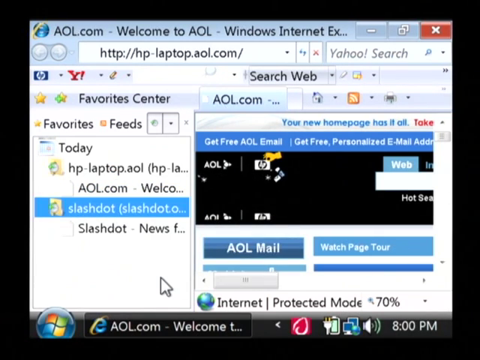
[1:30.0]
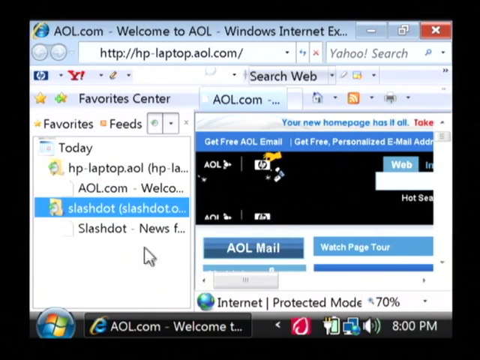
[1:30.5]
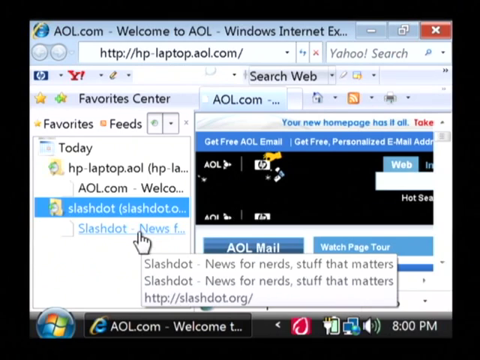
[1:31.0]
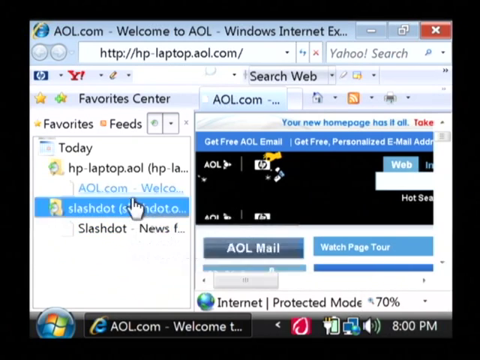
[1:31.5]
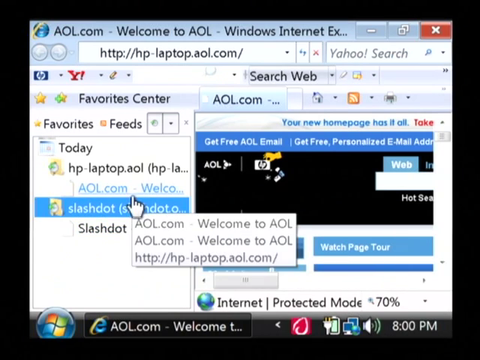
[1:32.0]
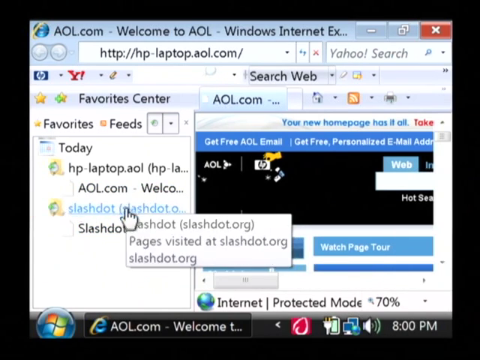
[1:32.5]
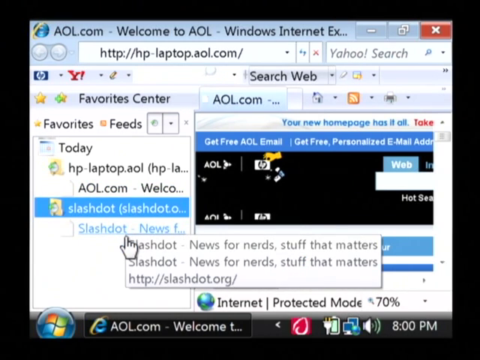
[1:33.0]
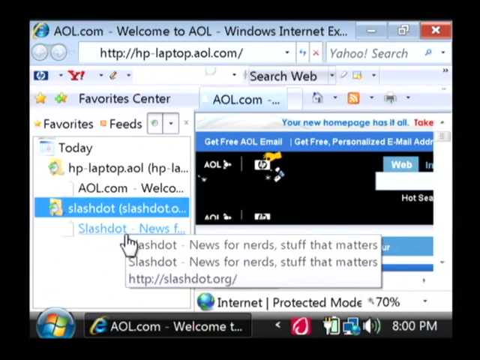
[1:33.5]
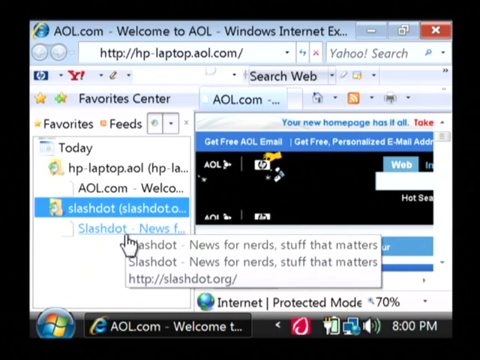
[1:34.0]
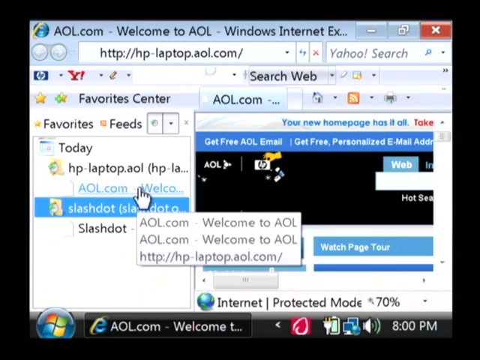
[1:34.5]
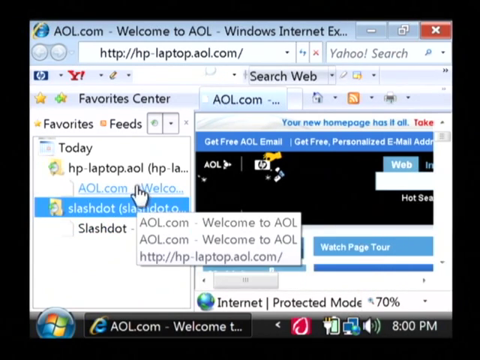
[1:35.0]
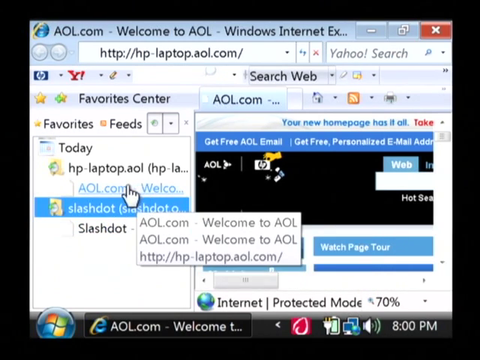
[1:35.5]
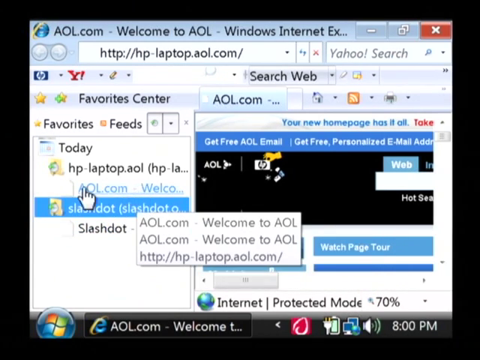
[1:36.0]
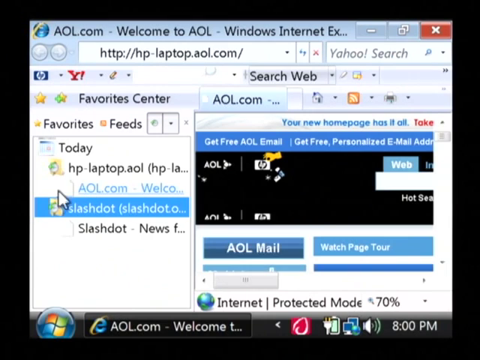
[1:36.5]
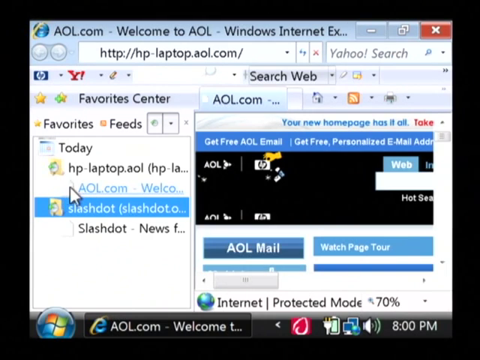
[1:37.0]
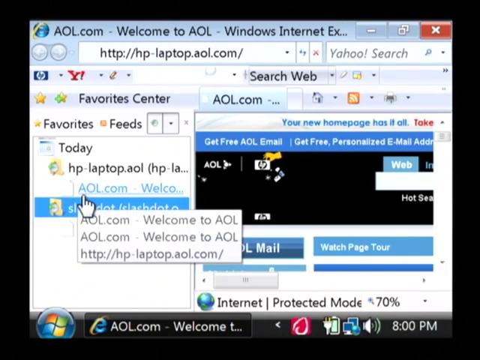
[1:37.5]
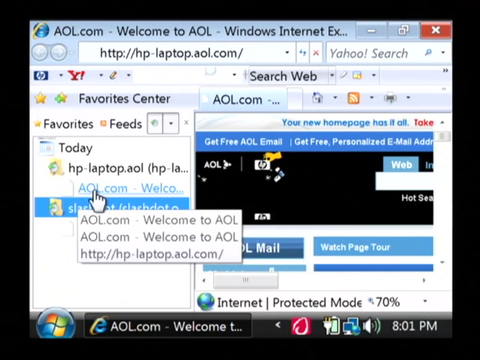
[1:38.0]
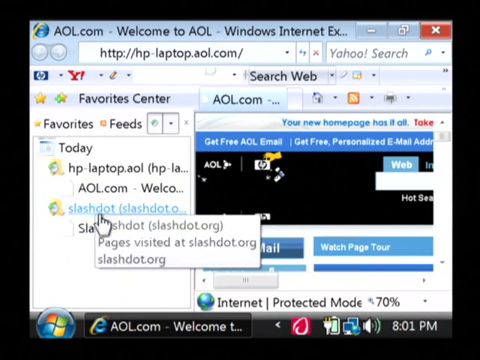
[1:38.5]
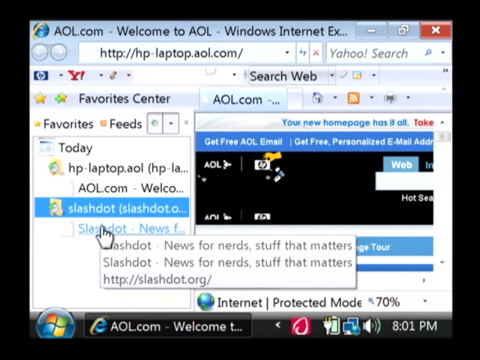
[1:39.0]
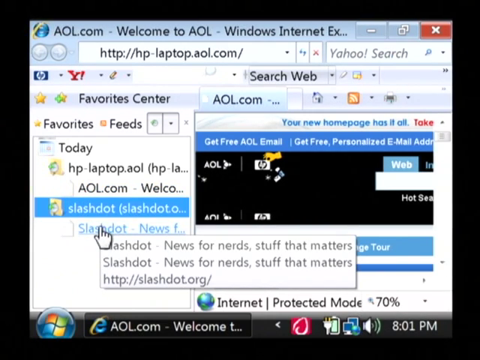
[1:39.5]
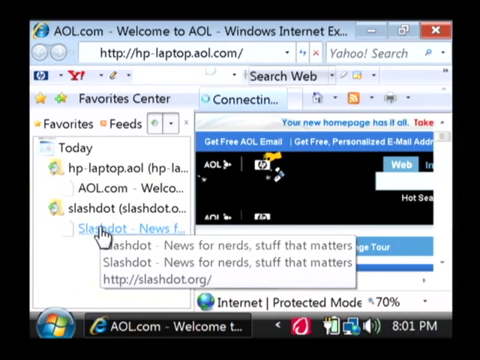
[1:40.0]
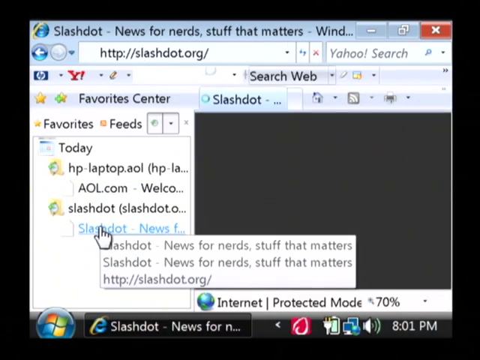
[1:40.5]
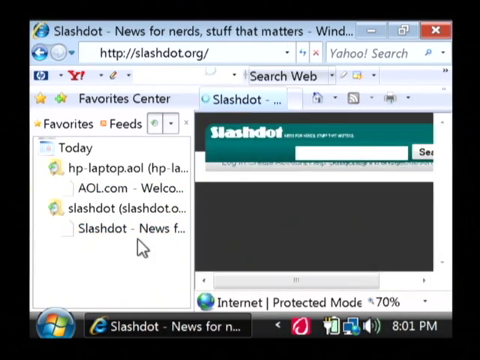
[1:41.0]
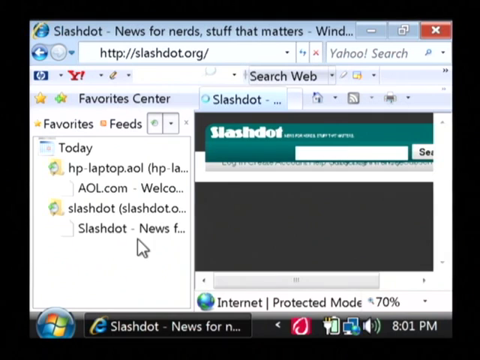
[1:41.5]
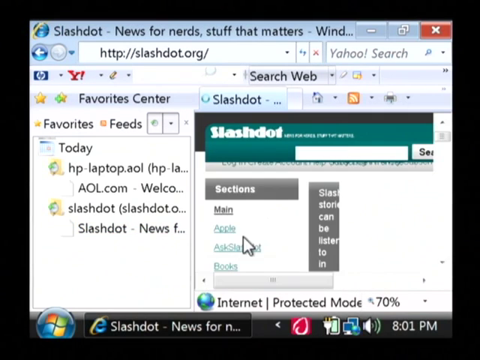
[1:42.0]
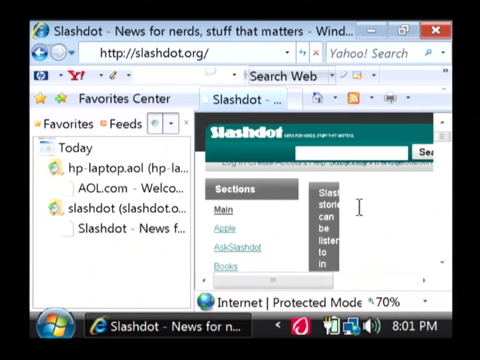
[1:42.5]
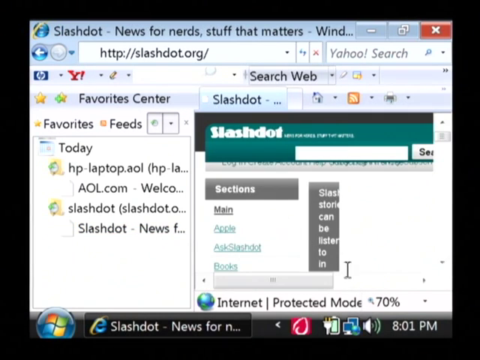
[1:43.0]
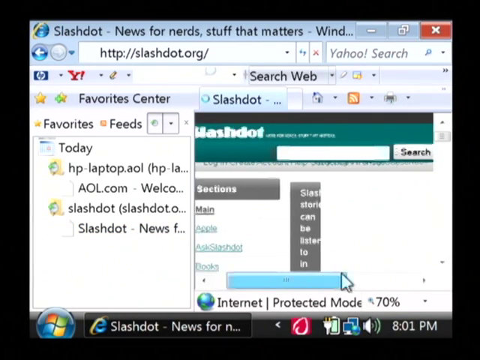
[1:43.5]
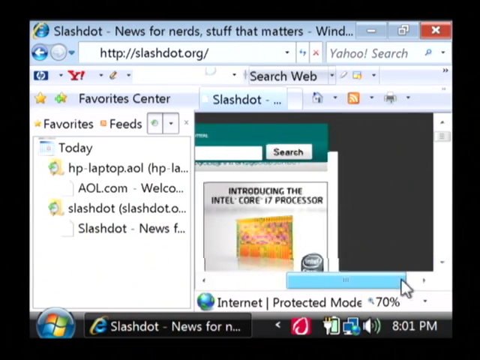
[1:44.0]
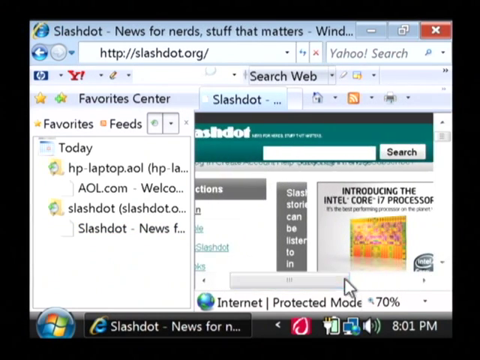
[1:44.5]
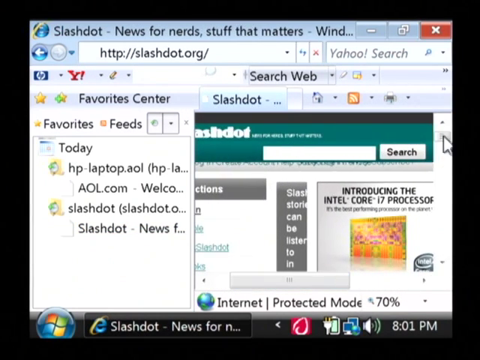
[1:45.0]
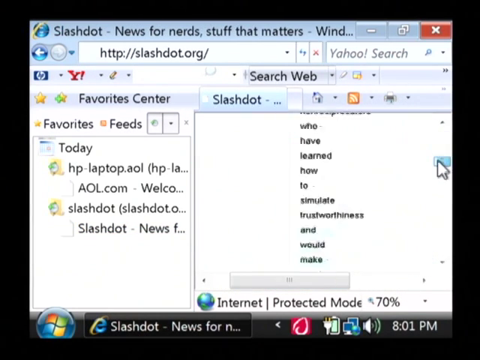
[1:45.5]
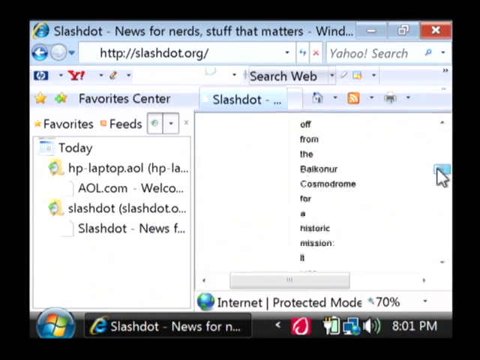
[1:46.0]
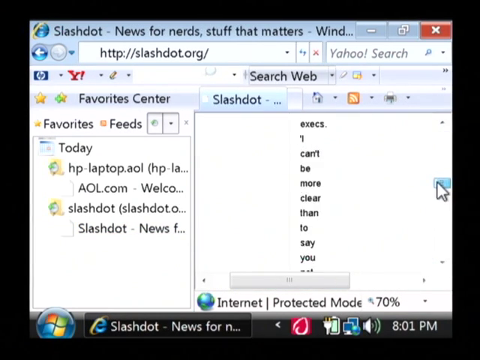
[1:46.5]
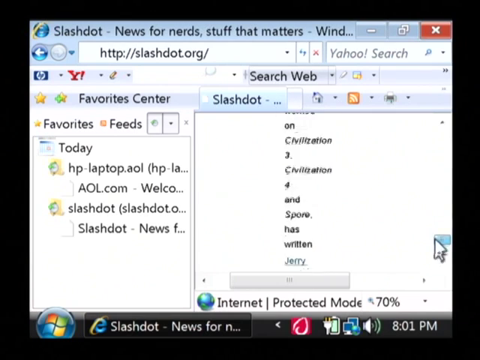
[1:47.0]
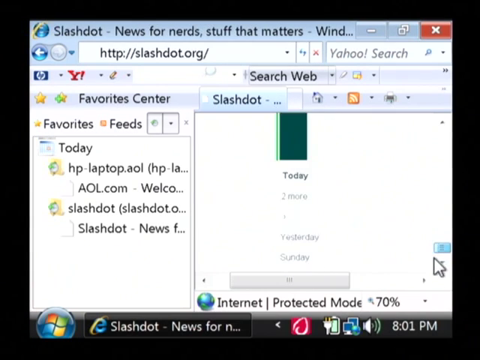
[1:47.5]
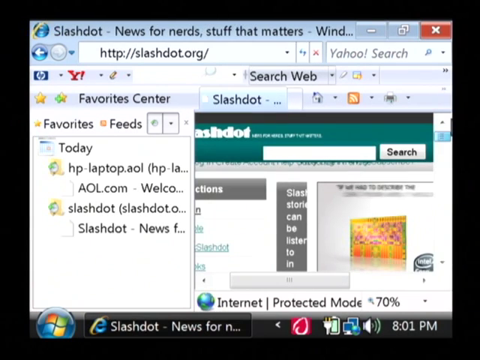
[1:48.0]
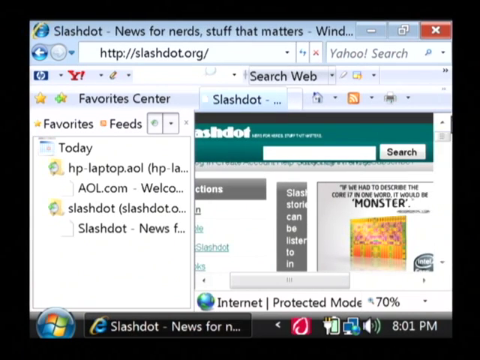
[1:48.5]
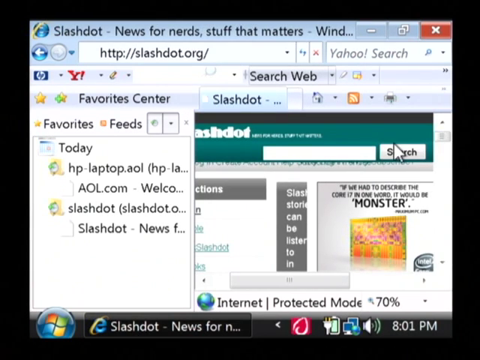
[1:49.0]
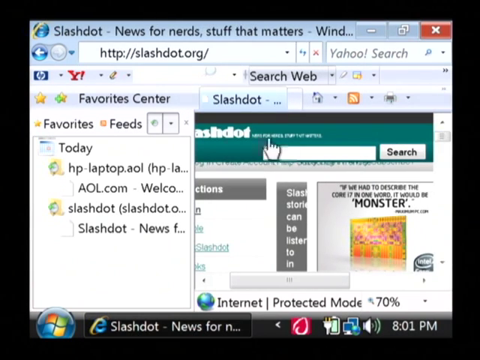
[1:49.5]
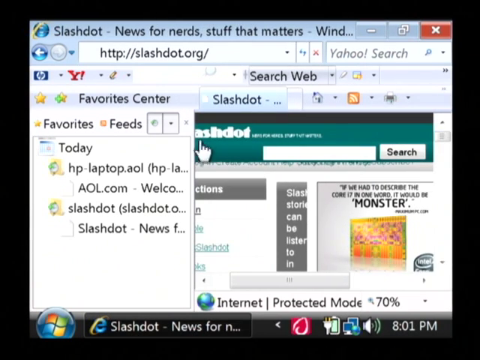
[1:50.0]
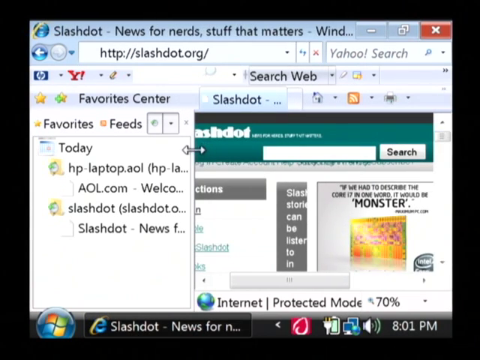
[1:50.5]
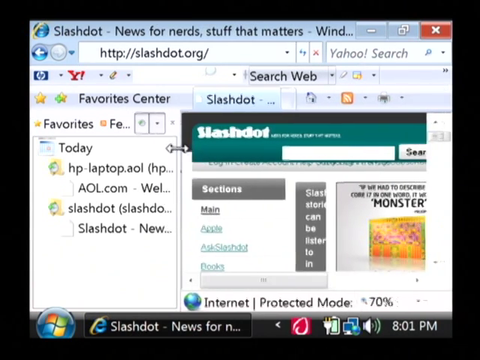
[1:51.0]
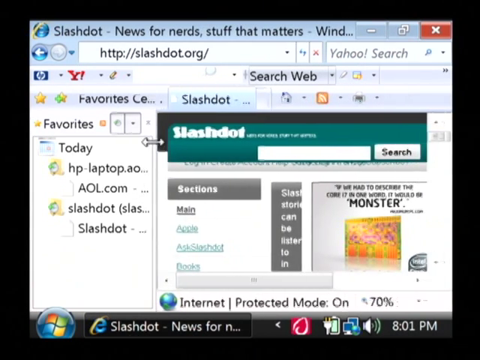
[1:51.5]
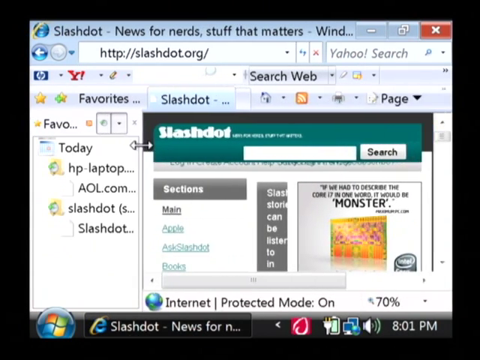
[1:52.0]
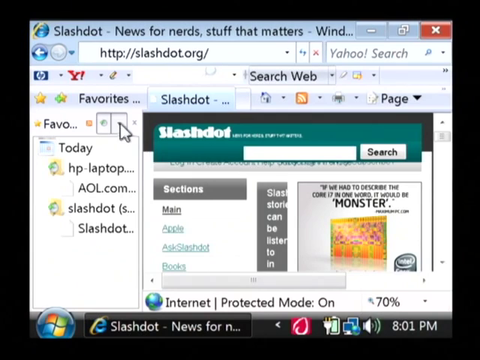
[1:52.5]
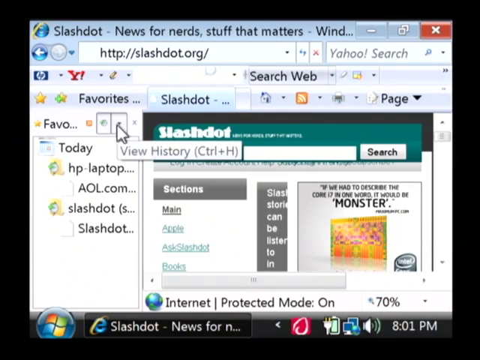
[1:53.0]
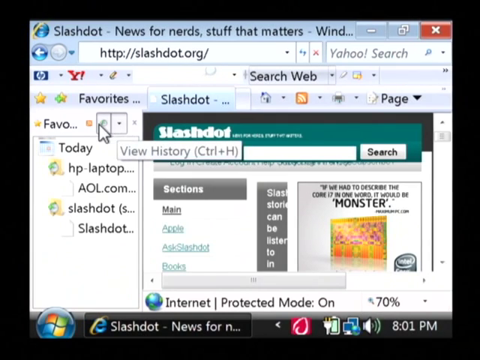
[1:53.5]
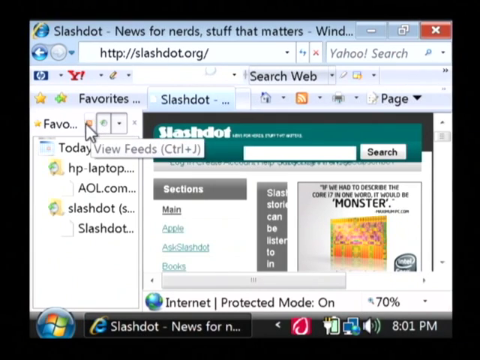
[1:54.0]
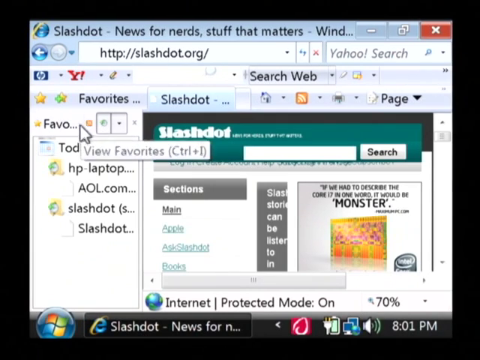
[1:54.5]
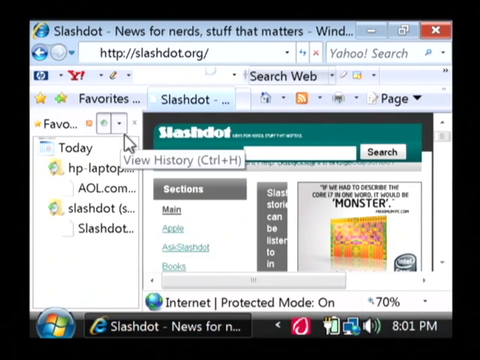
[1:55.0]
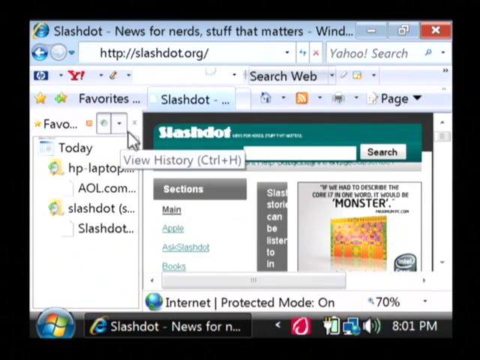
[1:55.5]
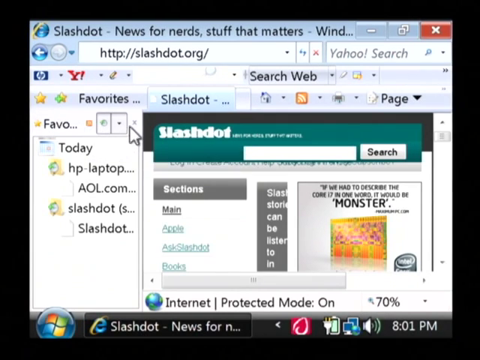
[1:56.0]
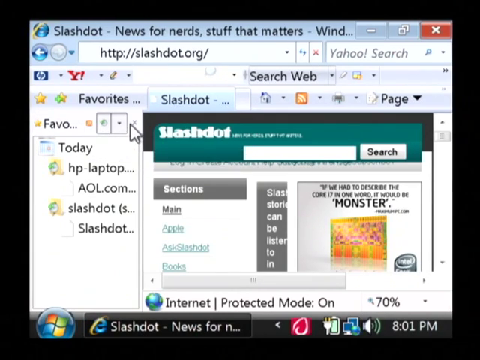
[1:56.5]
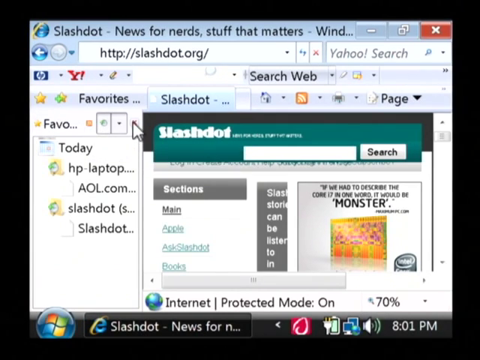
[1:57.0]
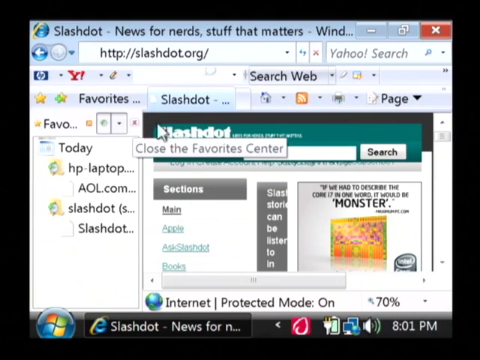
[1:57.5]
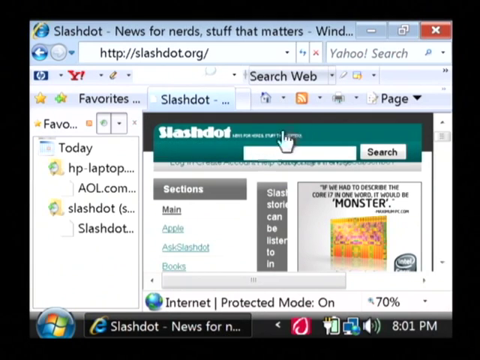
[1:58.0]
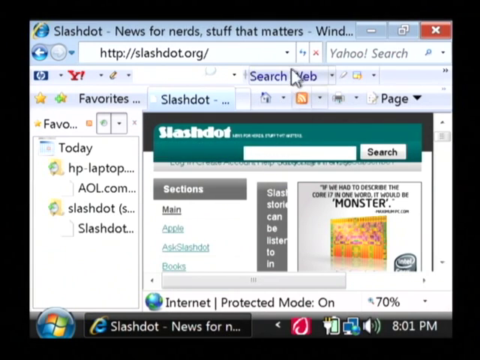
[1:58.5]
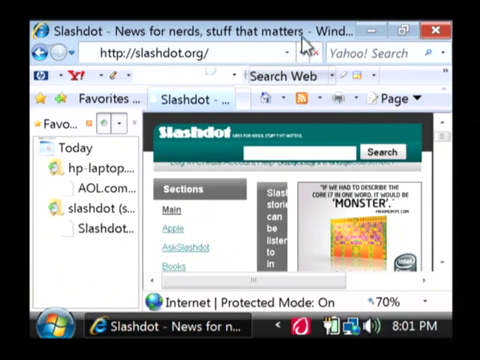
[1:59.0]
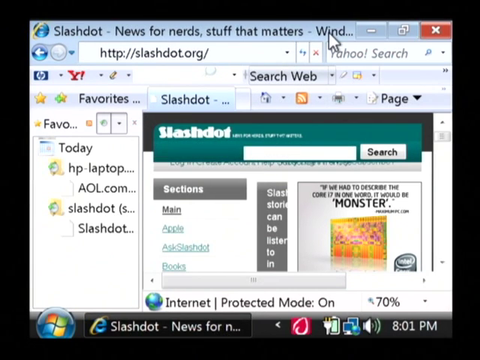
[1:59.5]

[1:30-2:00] In the browsing history panel, the user goes over each of the history entries. There are two: AOL, and below it Slashdot. Hovering over each entry shows a small tooltip about the website. He hovers over Slashdot, then AOL, then goes back to Slashdot and clicks on it, loading the Slashdot web page. He scrolls down with the scroll bar on the right to show more of the page and scrolls back up. He then resizes the browsing history navigation bar on the left, moving its edge to the left so more of the screen is visible. He hovers over the options at the top of the browsing history bar, which is part of Favorites: first viewHistory, then viewFeeds, and then the cursor goes back to the right, apparently about to show something else.